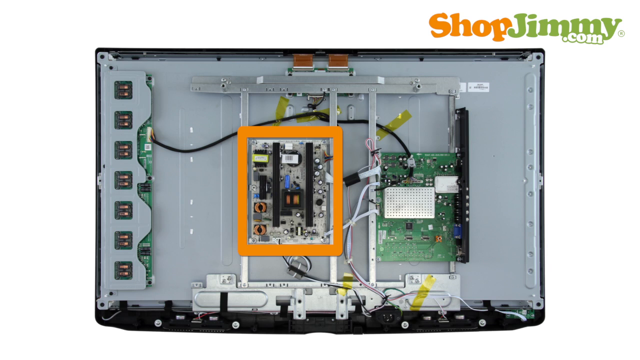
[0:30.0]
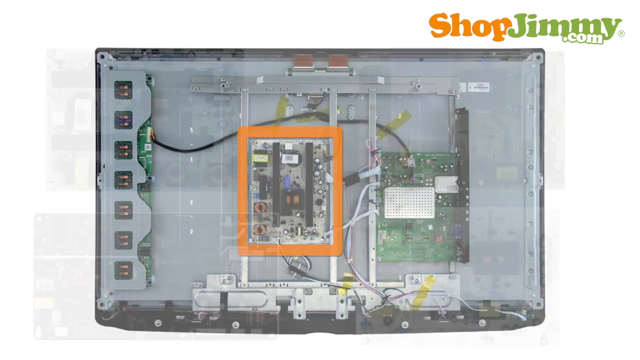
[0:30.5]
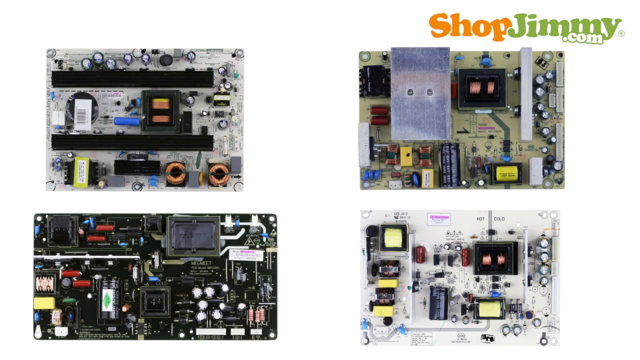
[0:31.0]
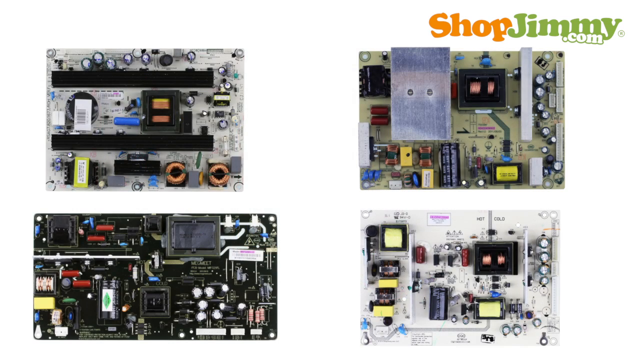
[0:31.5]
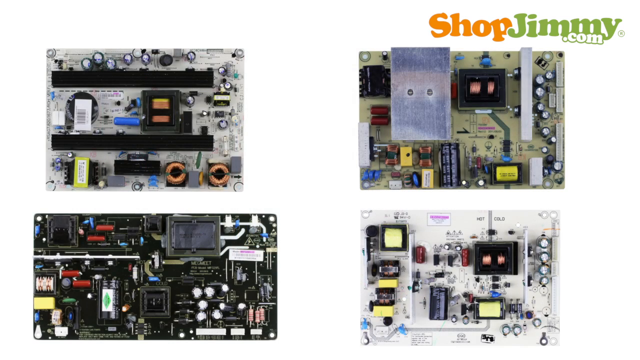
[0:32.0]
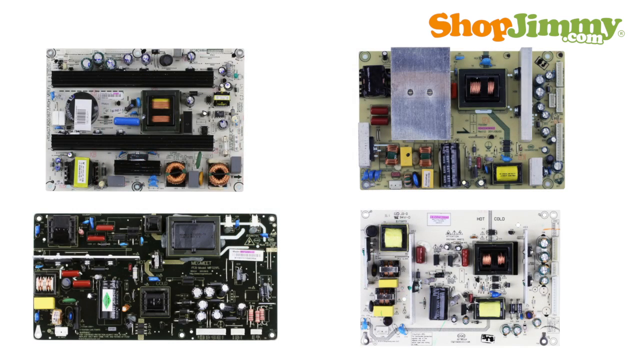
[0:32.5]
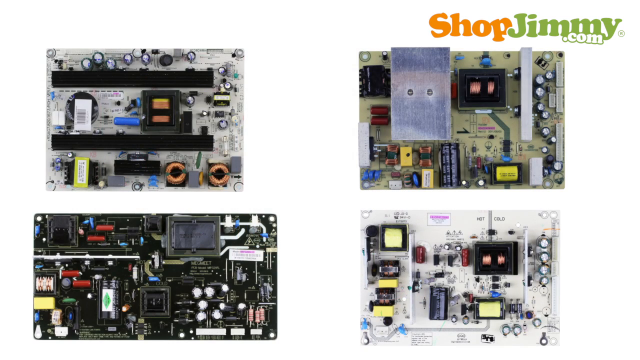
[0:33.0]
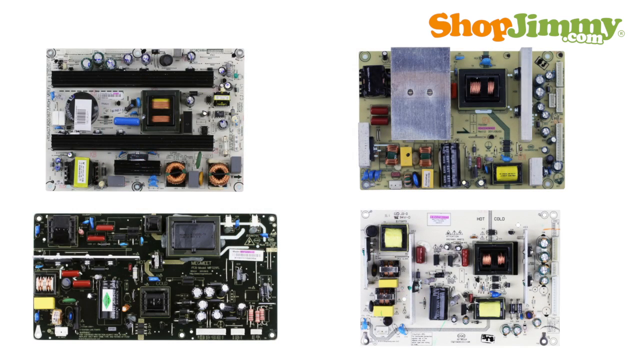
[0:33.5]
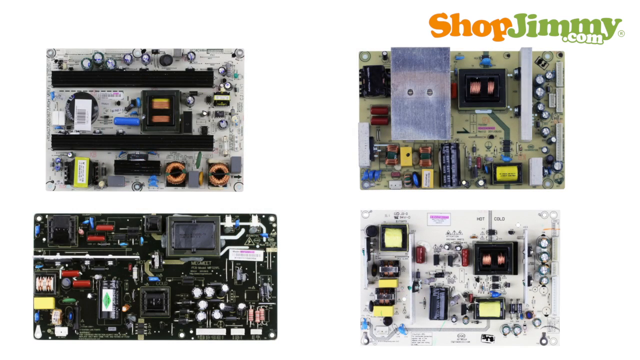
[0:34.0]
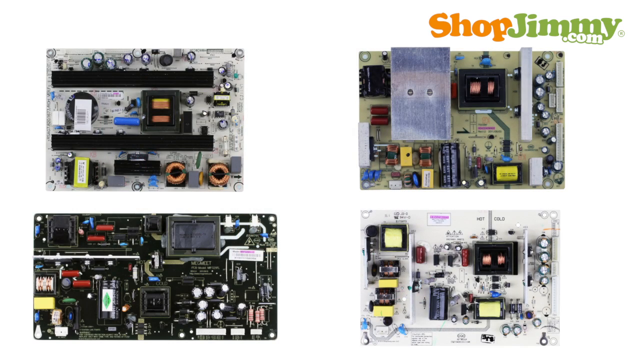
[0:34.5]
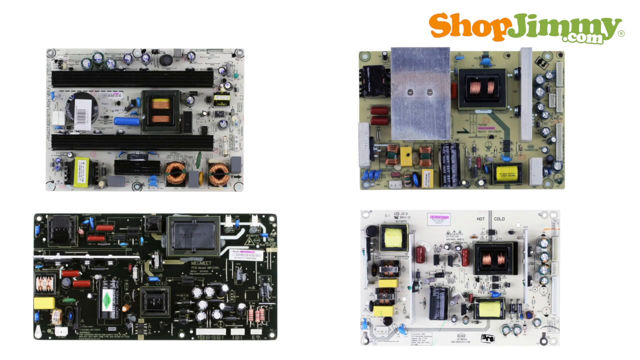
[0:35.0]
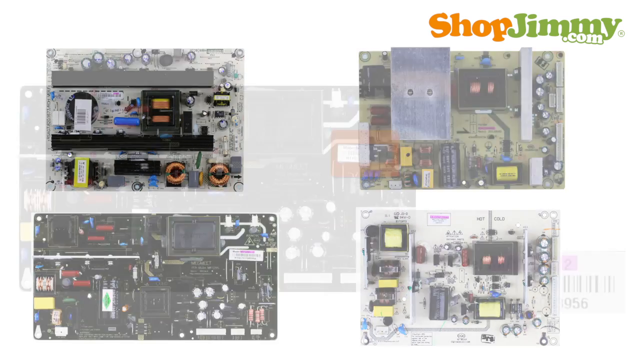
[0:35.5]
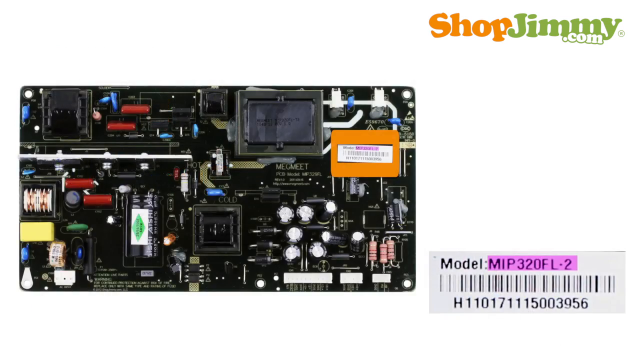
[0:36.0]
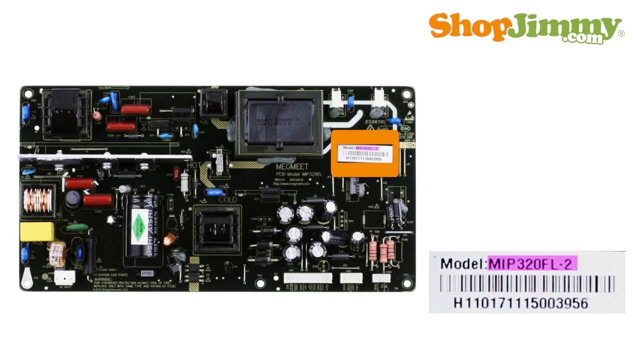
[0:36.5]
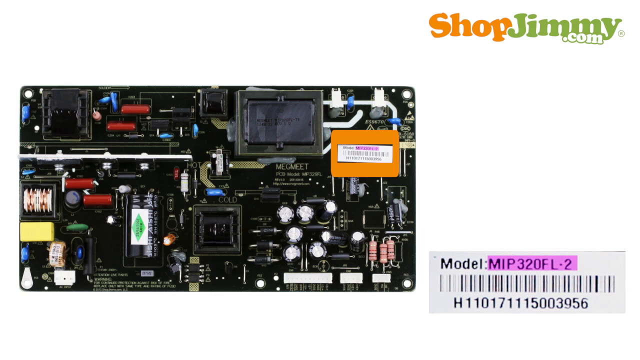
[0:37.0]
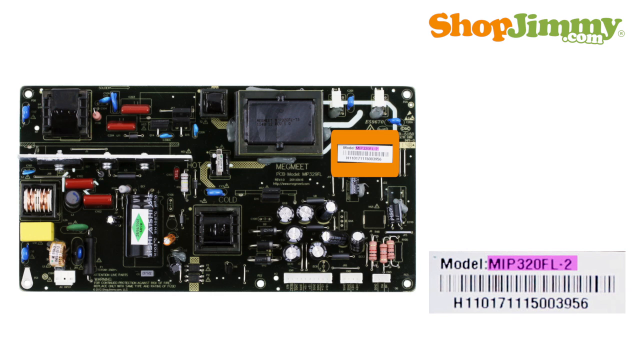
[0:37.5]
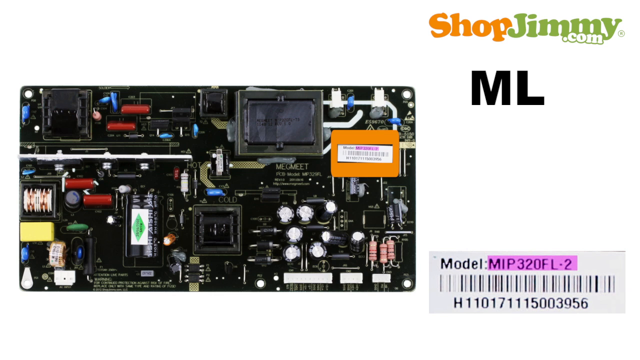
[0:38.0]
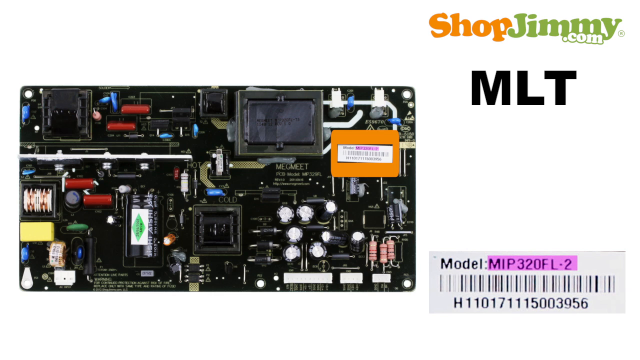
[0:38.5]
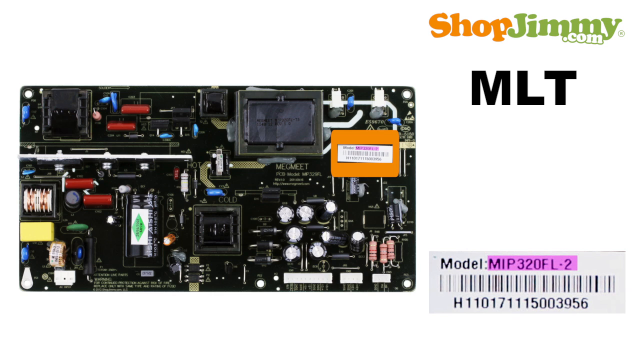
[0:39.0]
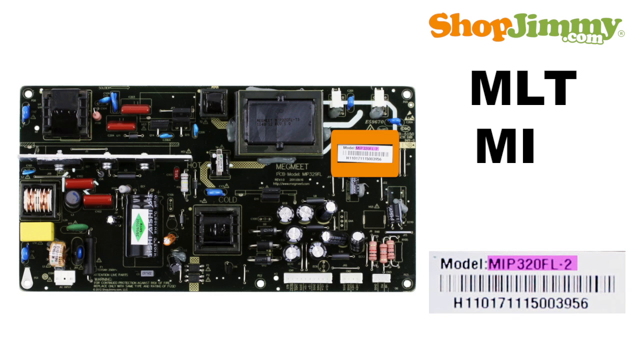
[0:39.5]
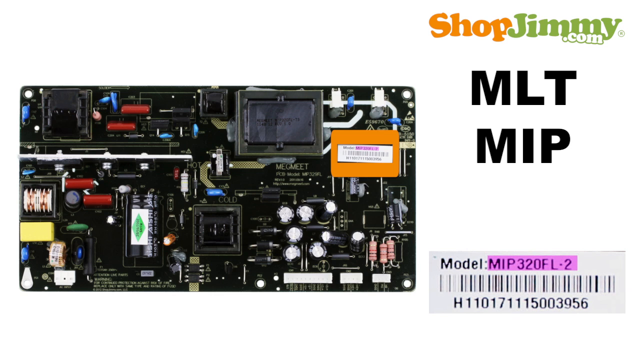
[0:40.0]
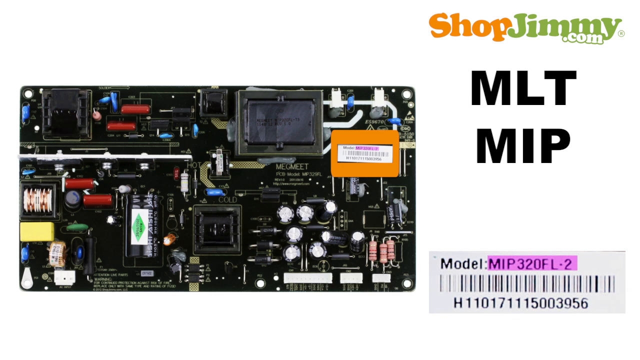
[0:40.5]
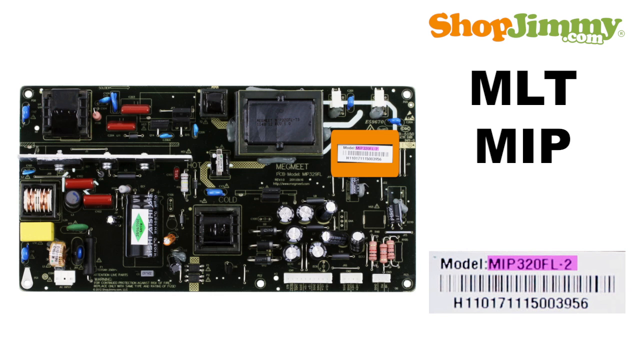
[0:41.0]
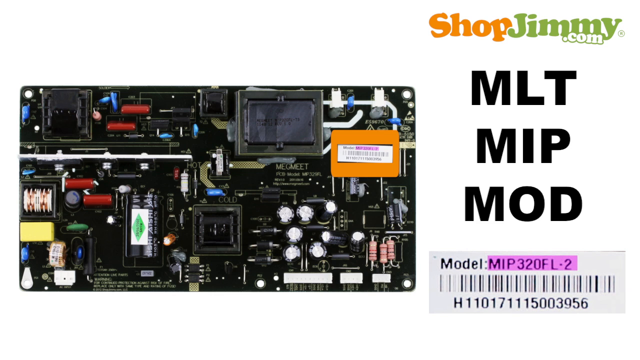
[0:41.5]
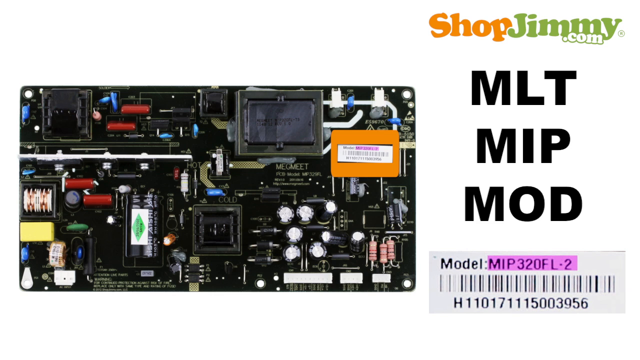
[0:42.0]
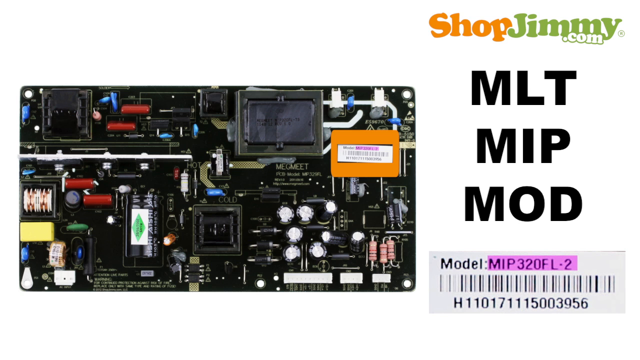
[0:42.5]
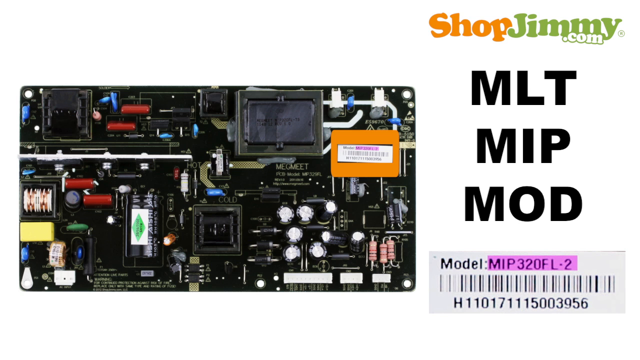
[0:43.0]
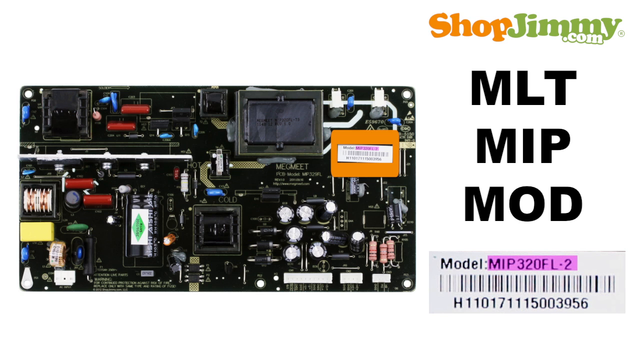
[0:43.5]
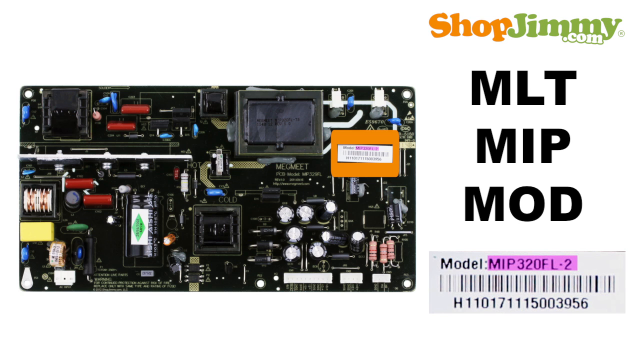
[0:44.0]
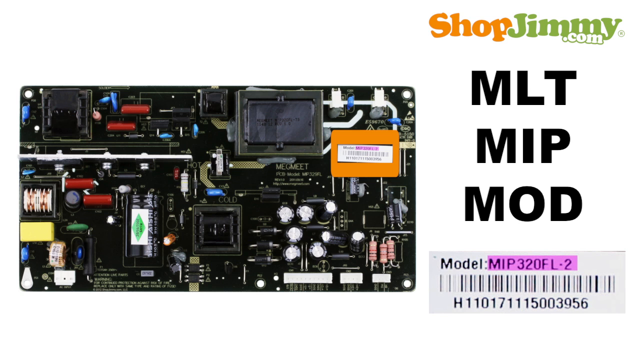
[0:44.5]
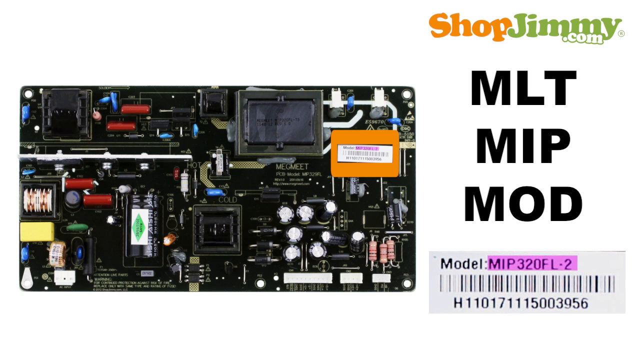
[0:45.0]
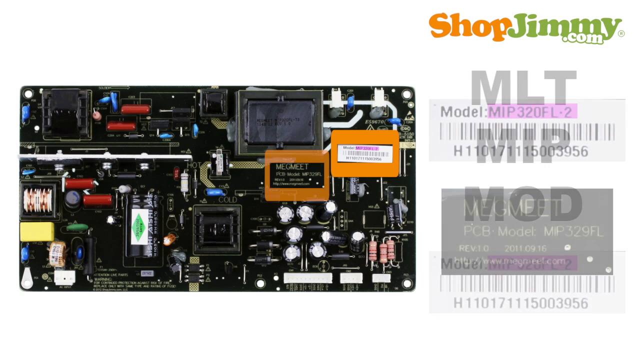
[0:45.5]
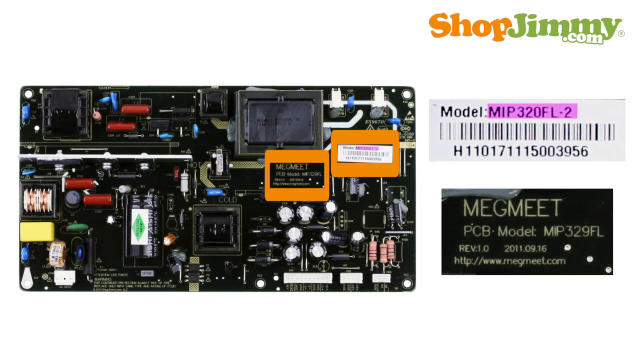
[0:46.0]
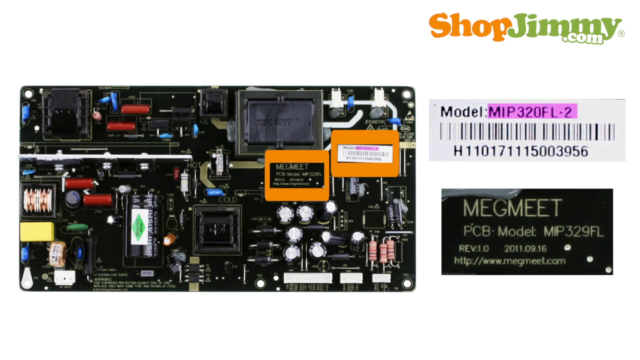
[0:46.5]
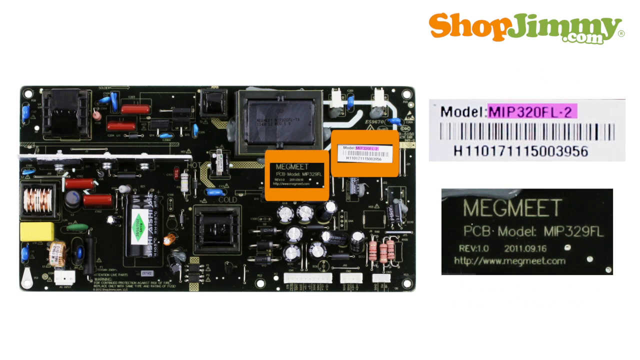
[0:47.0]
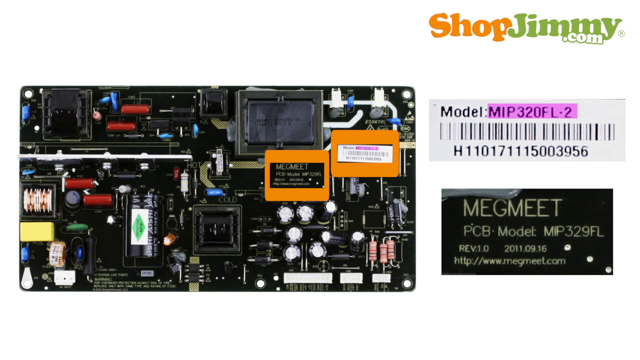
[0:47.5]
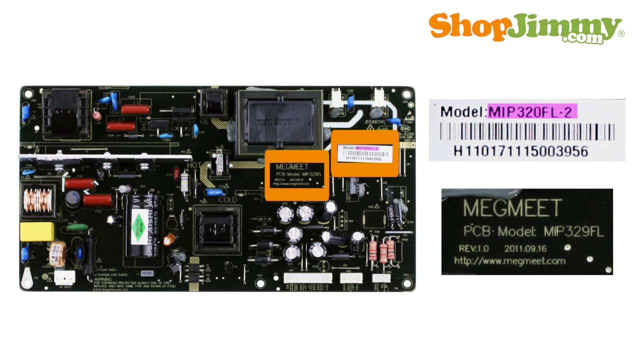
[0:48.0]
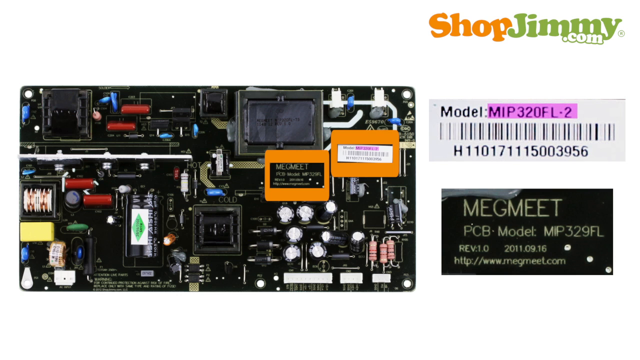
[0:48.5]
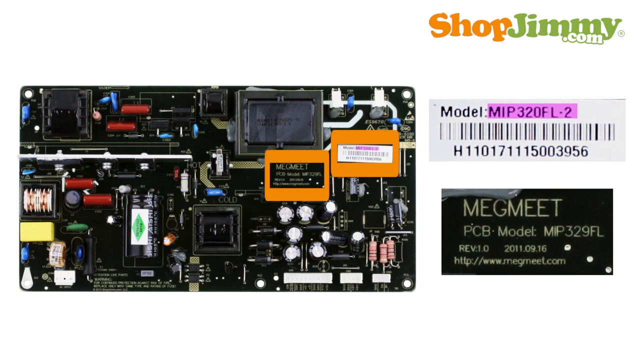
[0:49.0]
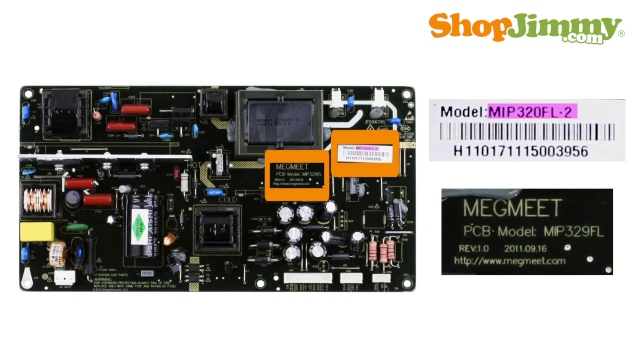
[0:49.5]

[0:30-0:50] The internals of a flat-screen TV are shown from the back, with the back panel removed completely. Several computer chips are visible on the left side and toward the center right, along with a transistor and various parts in the center. The screen then cuts to different motherboards and computer chips set onto a white background: the top left one is gray with multiple black plugs and transistors, the bottom left is black, the top right is green, and the bottom right is white. The video cuts to the black motherboard-like part. A barcode sticker on its right side is highlighted in an orange box and shown zoomed in on another photo to the right of the chip. It reads "Model MIP320FL-2", followed by a barcode, and underneath are letters and numbers reading "H110171115003956".